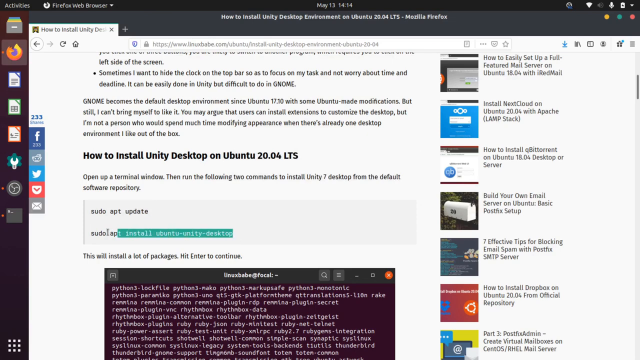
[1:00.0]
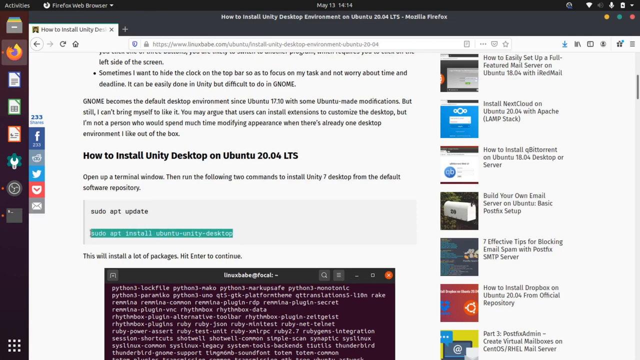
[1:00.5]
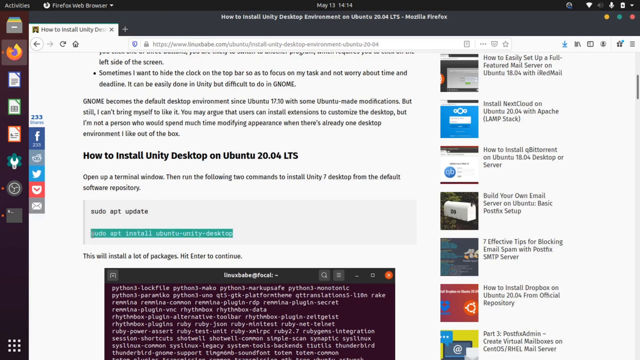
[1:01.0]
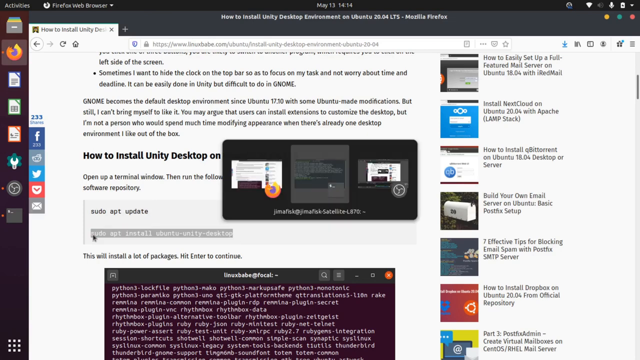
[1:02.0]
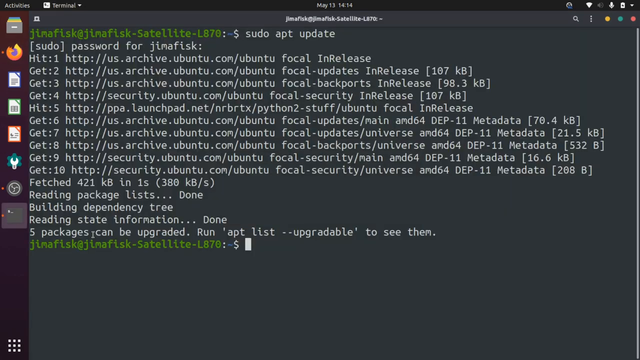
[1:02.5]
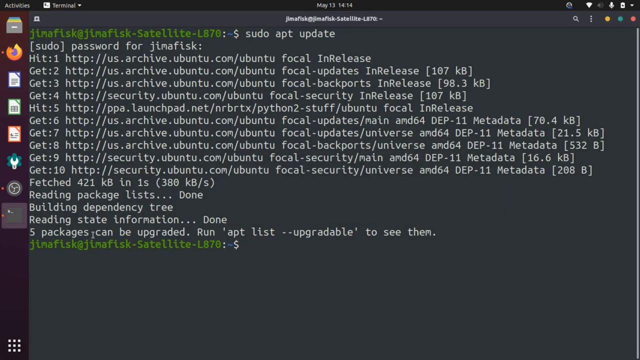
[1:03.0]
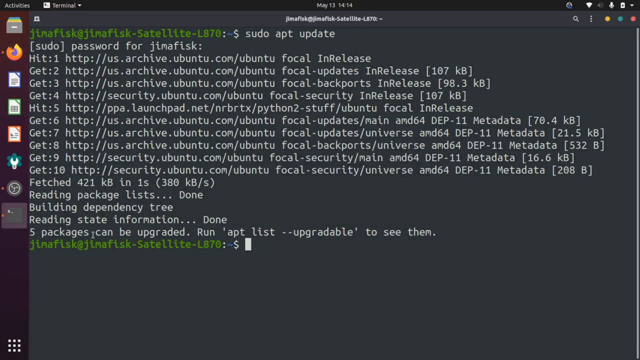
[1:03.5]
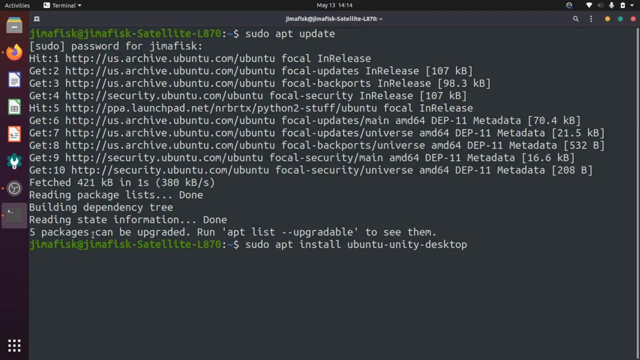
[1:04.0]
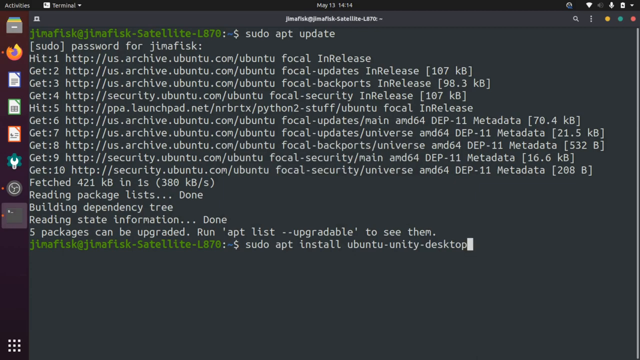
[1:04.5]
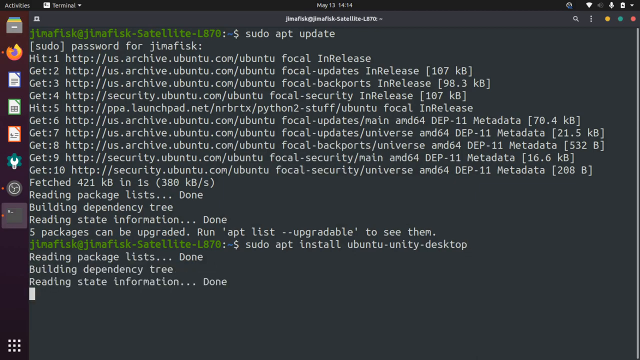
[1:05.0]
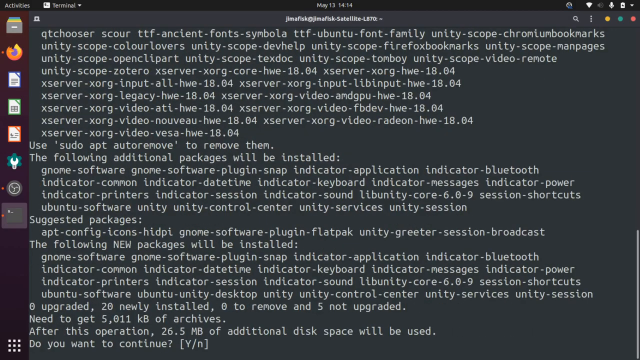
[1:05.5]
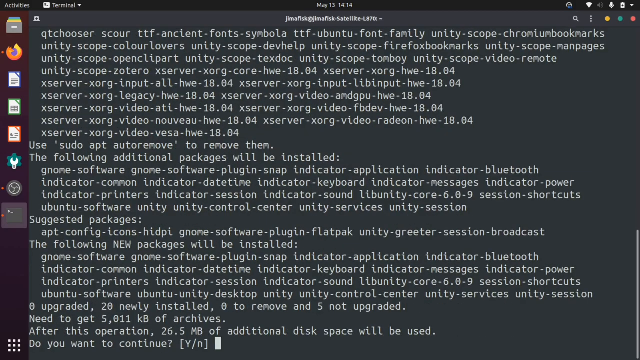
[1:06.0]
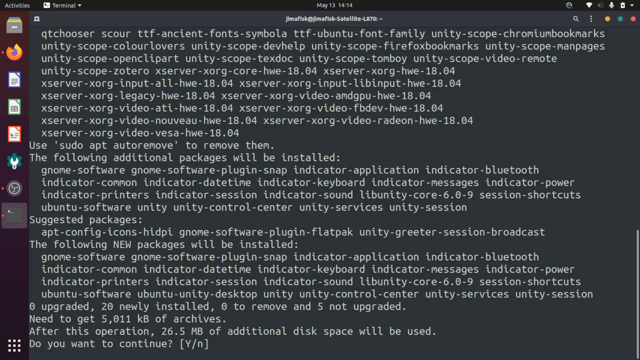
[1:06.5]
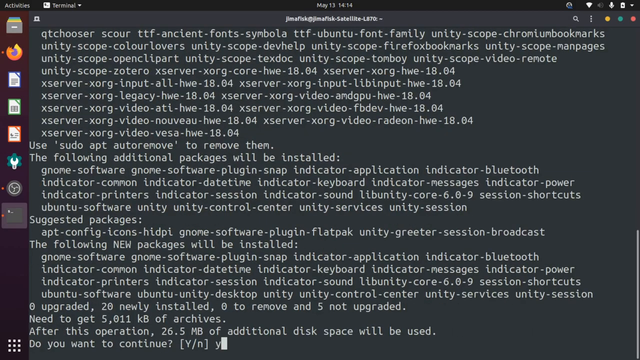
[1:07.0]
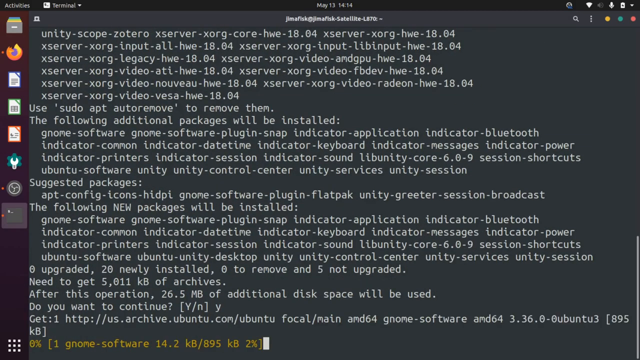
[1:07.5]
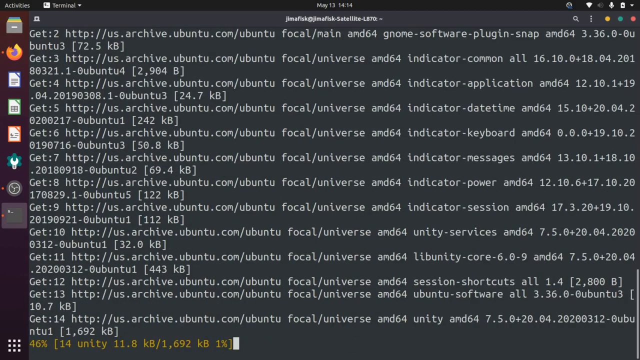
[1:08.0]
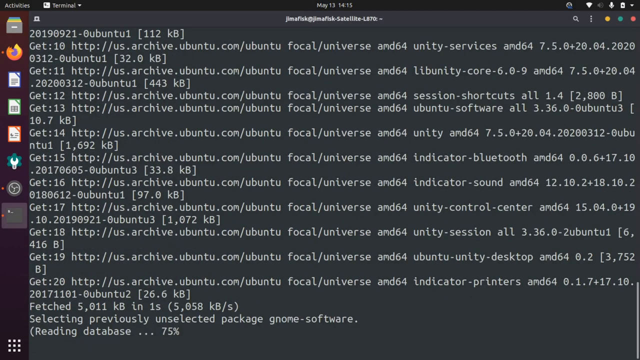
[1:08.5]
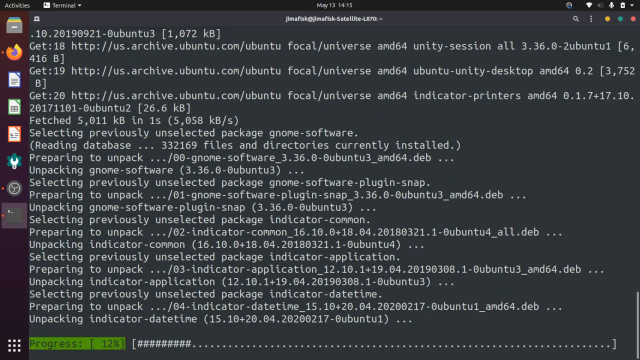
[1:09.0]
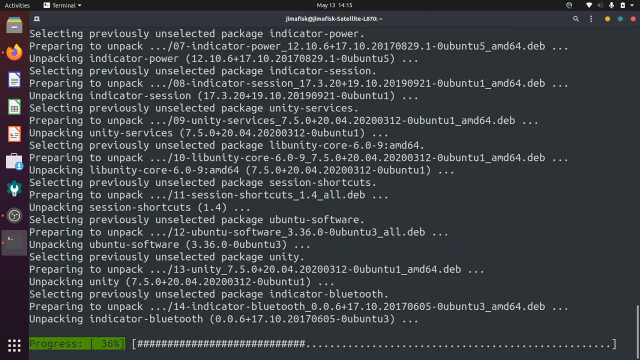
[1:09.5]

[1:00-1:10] A box for code opens on a Windows PC over a LinuxBabe web page with an article behind it. The pop-up box writes a lot of code very fast from left to right, and the page advances down as the code is written. The view returns to the web page with the article on how to install Unity Desktop on Ubuntu 20.04 LTS. The cursor highlights "install Ubuntu Unity Desktop," which again opens a box for code, and a lot of code is written down the entire box.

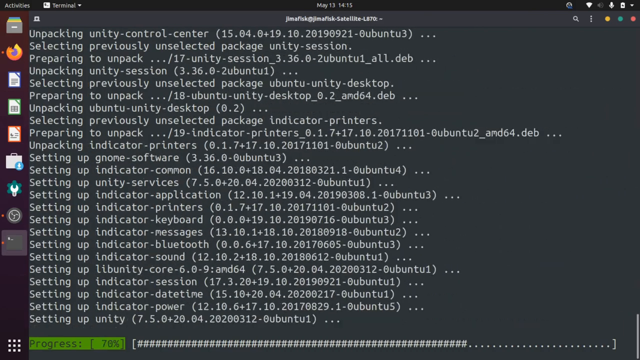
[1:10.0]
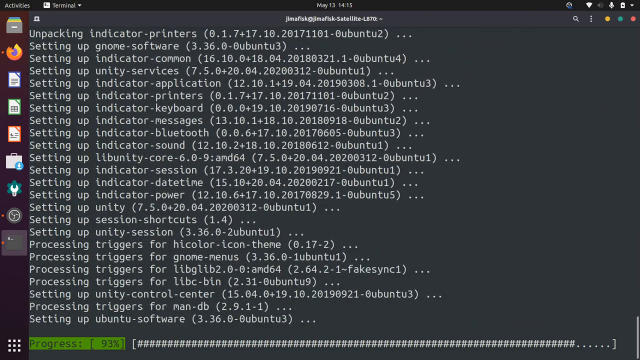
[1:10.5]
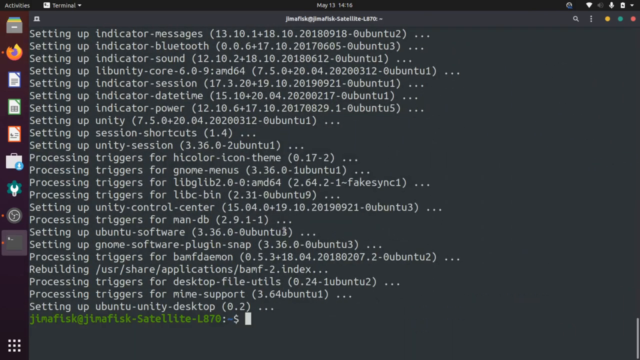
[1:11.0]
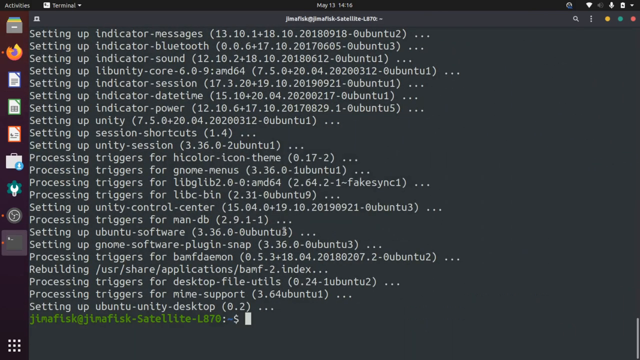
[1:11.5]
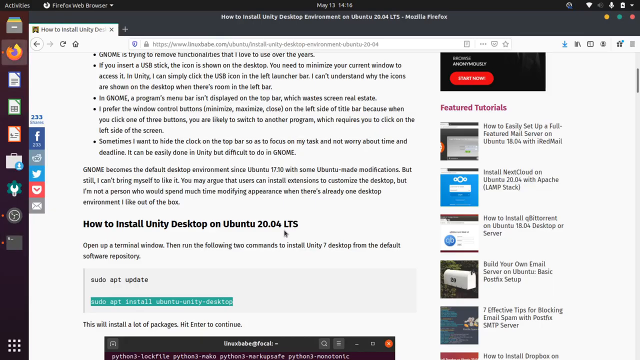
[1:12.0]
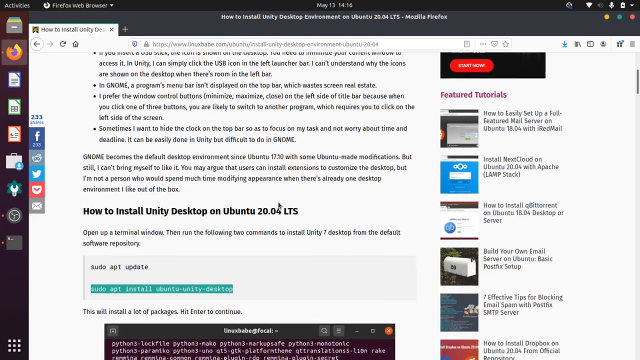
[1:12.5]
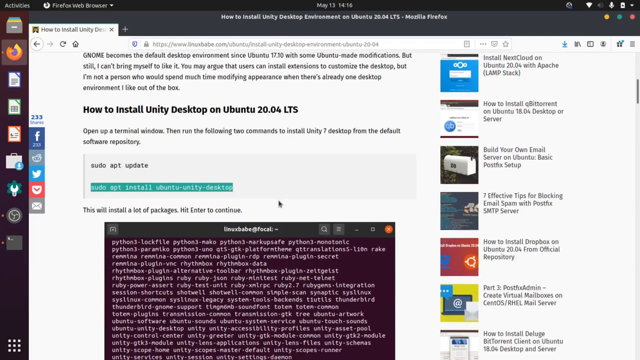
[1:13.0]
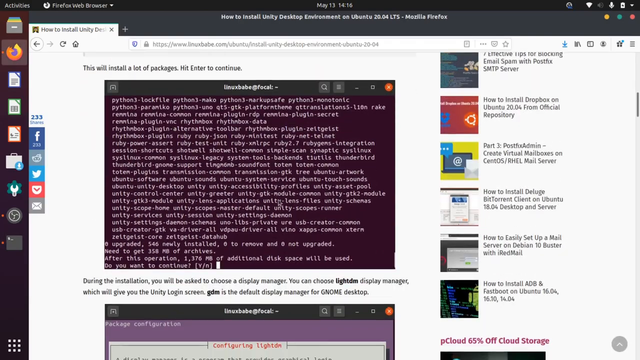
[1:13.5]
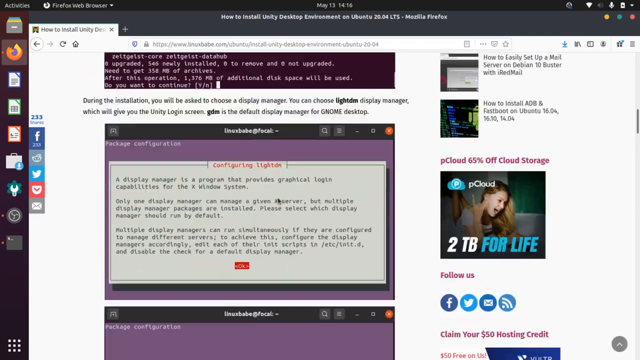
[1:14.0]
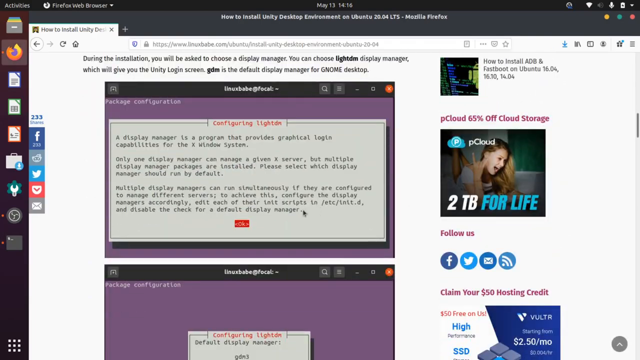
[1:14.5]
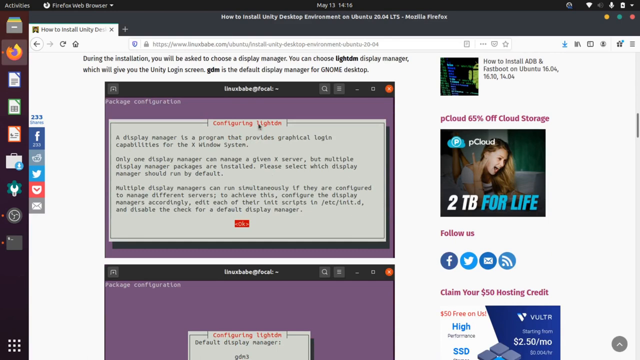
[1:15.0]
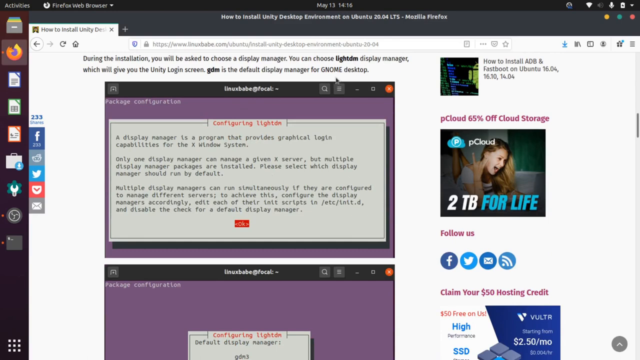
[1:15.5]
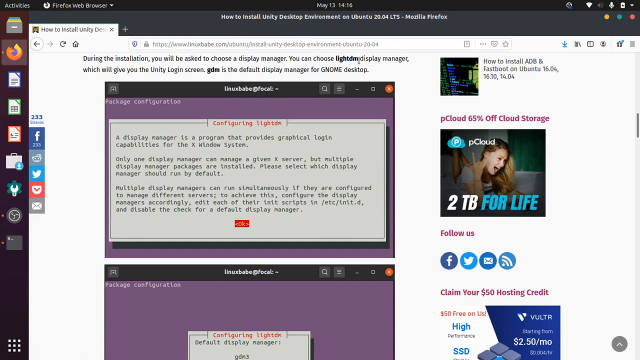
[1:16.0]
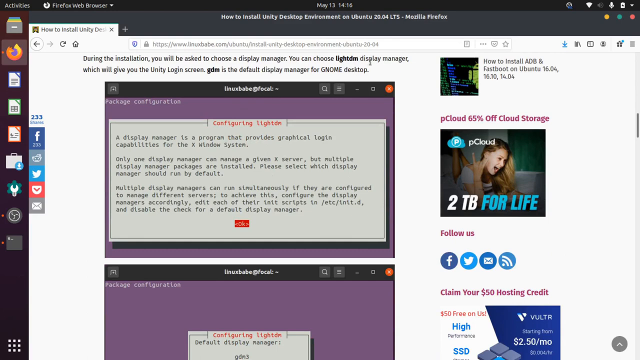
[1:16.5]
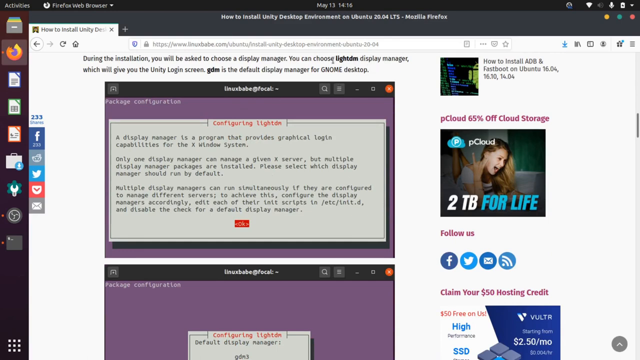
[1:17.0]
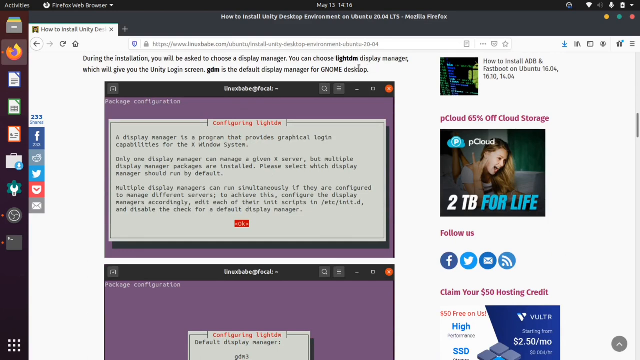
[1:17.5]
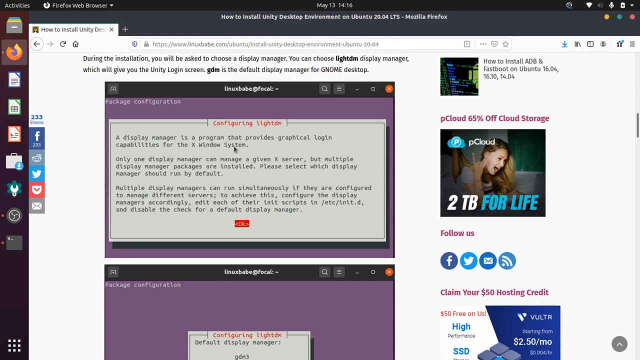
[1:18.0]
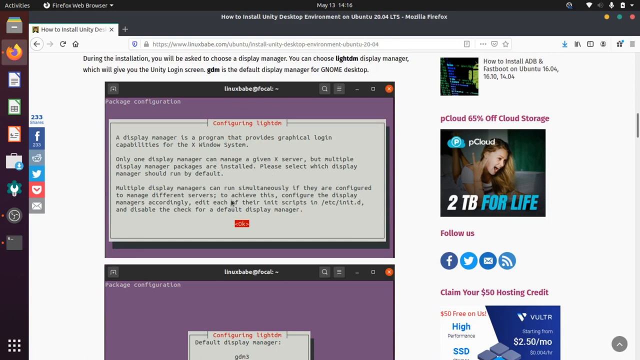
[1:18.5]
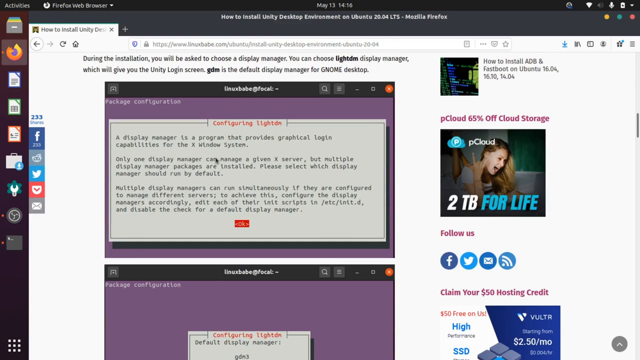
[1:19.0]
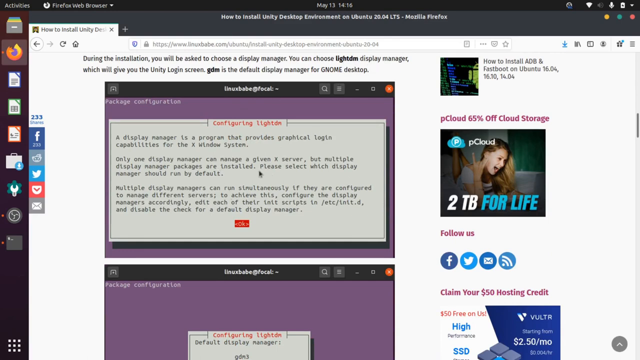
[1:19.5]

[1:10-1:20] A black box for code covers almost the entire screen over a web page, with a toolbar on the left. At the top is a date stamp of May 13th and a time stamp of 14:15. White code is written in the box very fast, and the code scrolls upward as it is written. The video then transitions to a web page with an article titled "How to Install Unity Desktop Environment on Ubuntu 20.04 LTS Mozilla Firefox." There are two pop-up boxes for configuring something that is hard to read, possibly light DM, one on top and one below it; the configuration boxes appear to have a bit of code in them.